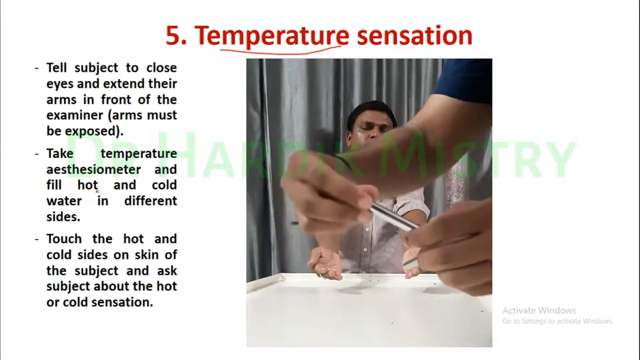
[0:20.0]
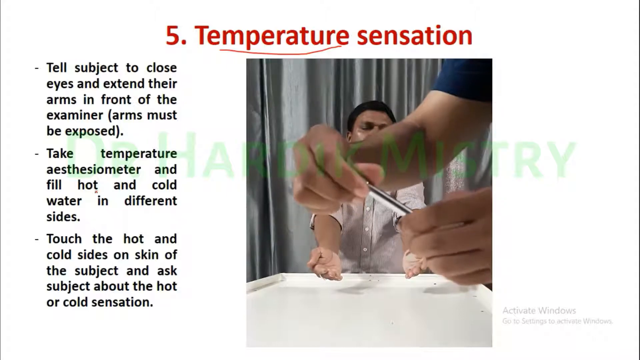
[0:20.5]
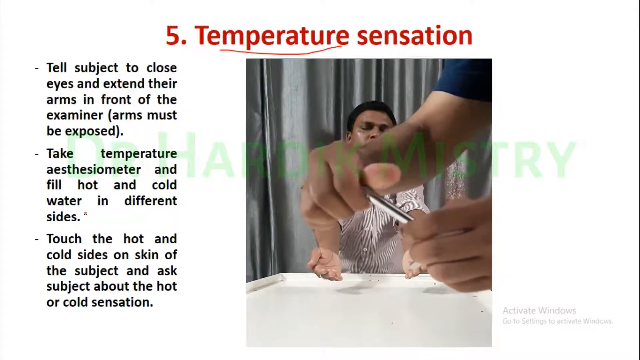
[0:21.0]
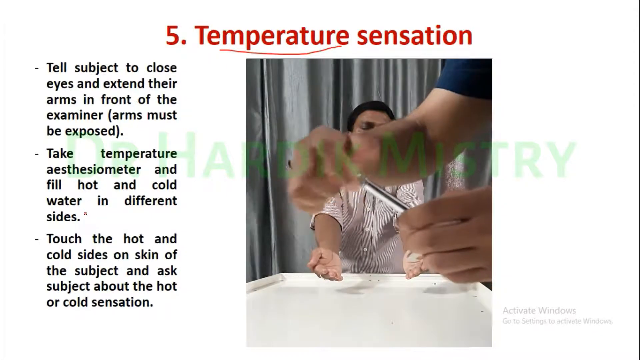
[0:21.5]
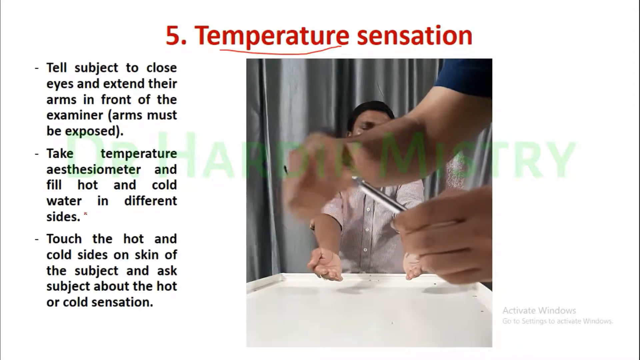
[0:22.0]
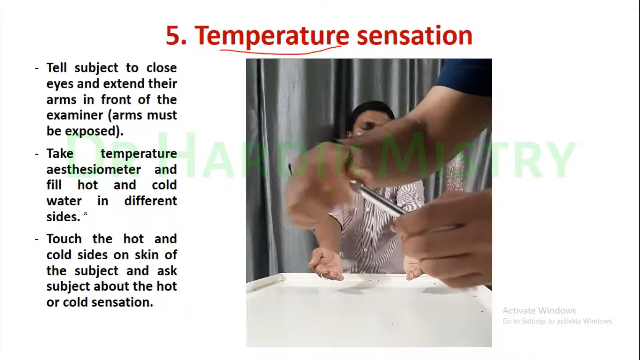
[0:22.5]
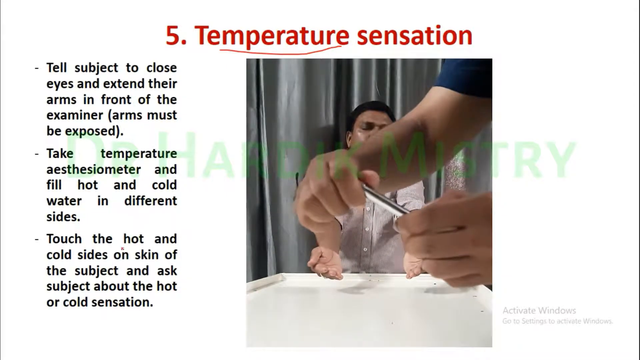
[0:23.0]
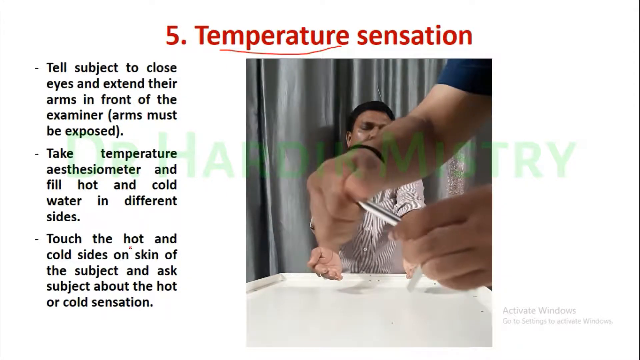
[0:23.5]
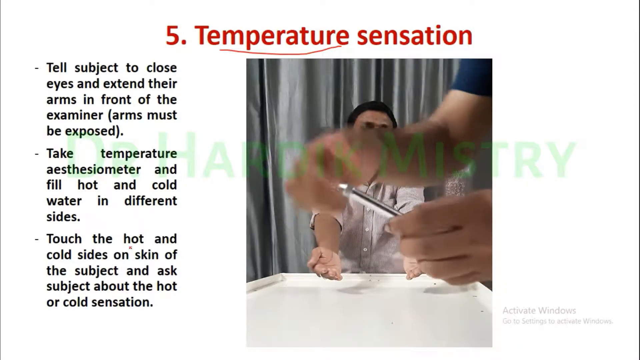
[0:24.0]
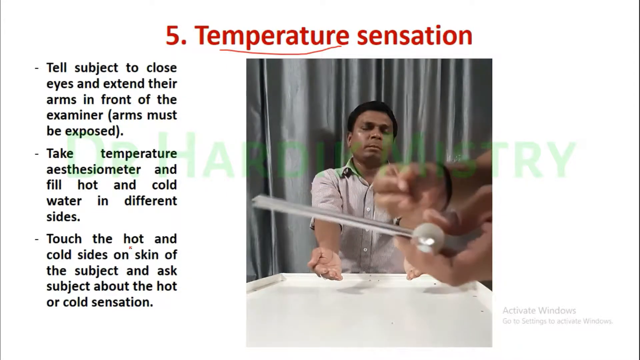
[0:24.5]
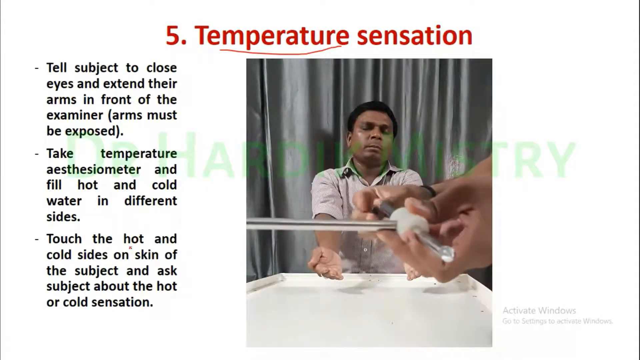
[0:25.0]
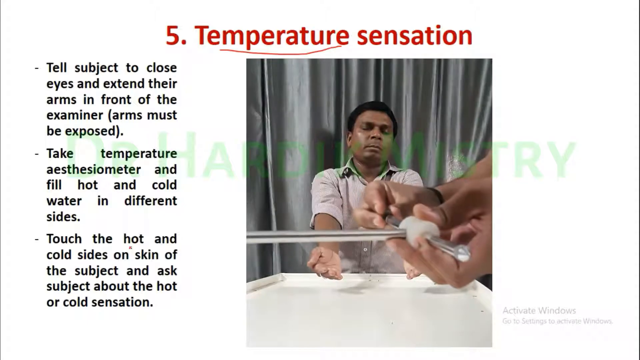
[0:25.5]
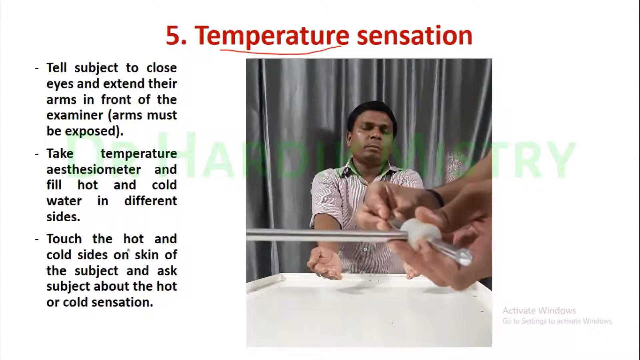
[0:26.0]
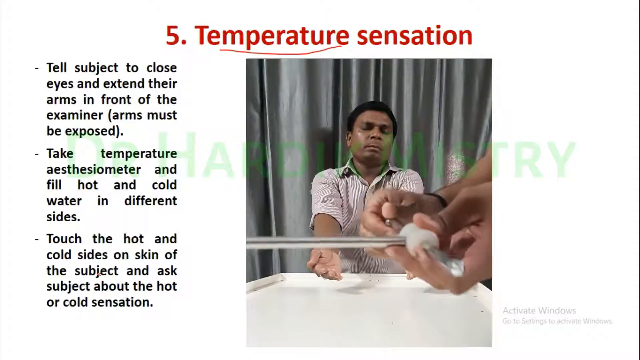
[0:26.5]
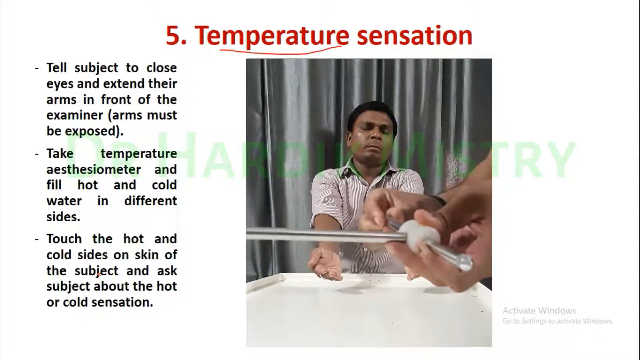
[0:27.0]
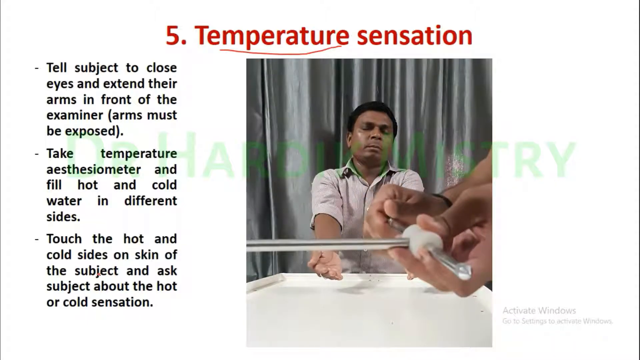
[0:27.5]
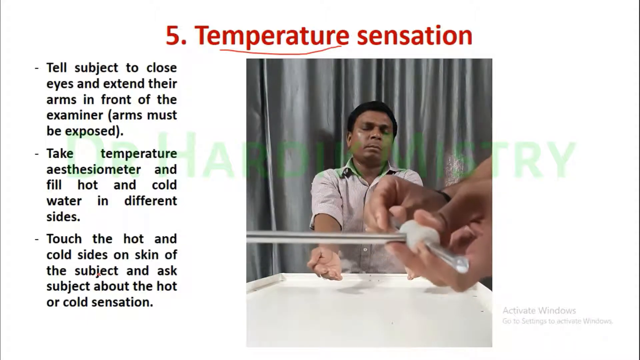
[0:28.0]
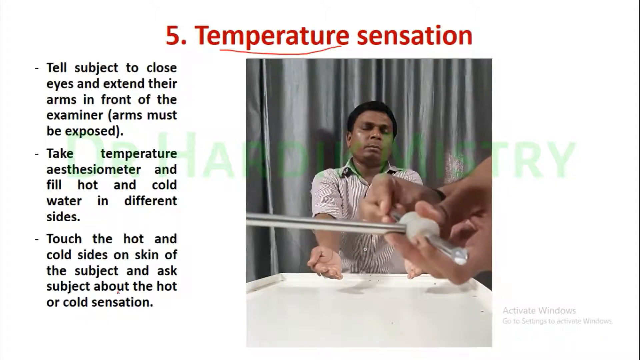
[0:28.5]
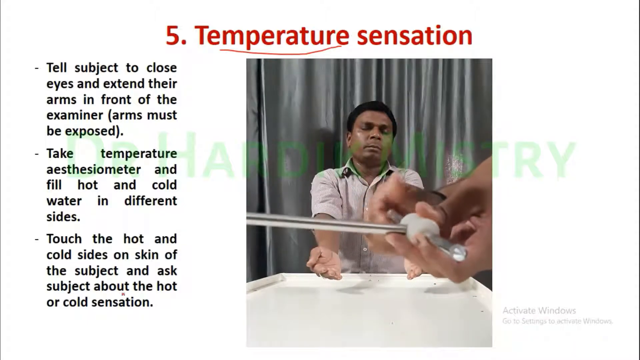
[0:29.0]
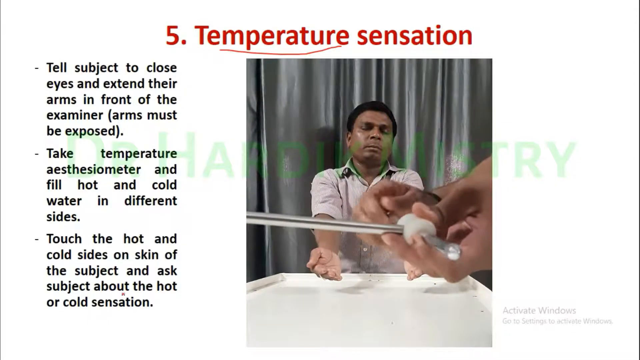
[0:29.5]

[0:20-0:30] A small window with a video is on the right, a header is at the top, and text is on the left. The red header reads "5. temperature sensation," with a messy red line under the word "temperature." The text on the left is in a narrow column: "tell subject to close eyes and extend their arms in front of the examiner. Arms must be exposed." The second item says "take temperature, aesthesiometer and fill hot and cold water in different sides," and the third says "touch the hot and cold sides on skin of the subject and ask the subject about the hot or cold sensation." In the video, the subject sits in front of a white table or a tray with his arms out in front of him and palms up, as if getting ready for the test. The person closest to the camera holds up what looks almost like a metal cross and is spinning things into the ends of the cross. The seated man has his eyes closed, as if he is nervous.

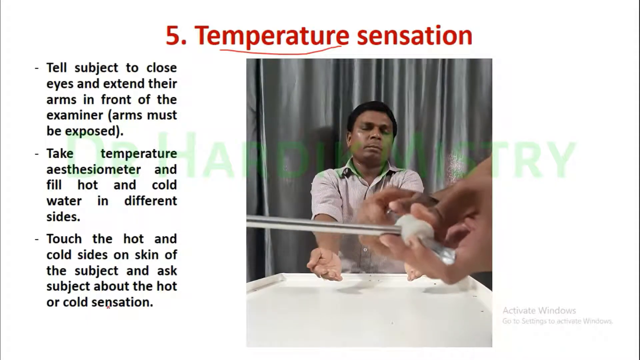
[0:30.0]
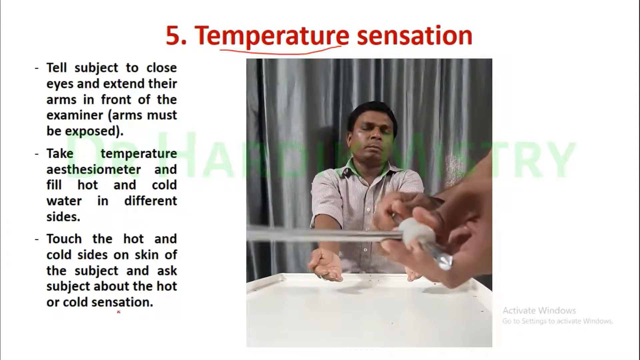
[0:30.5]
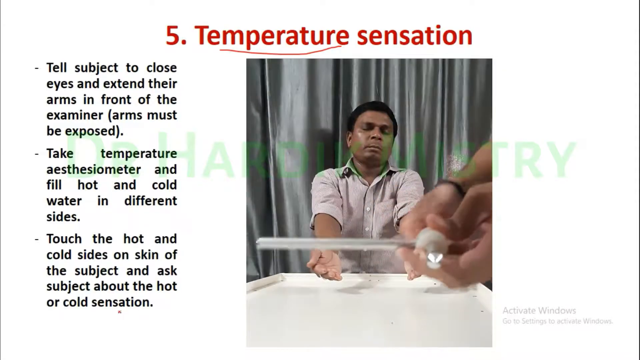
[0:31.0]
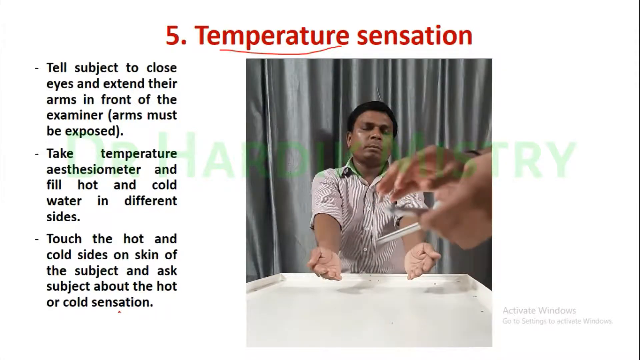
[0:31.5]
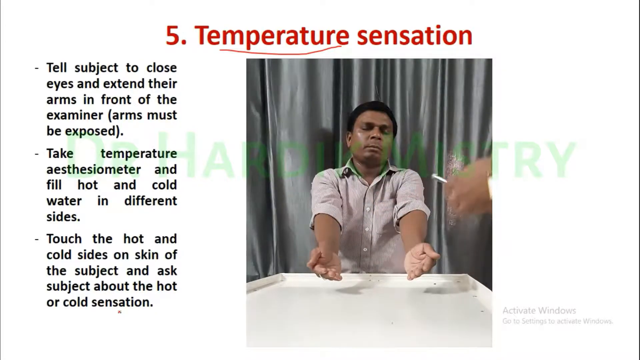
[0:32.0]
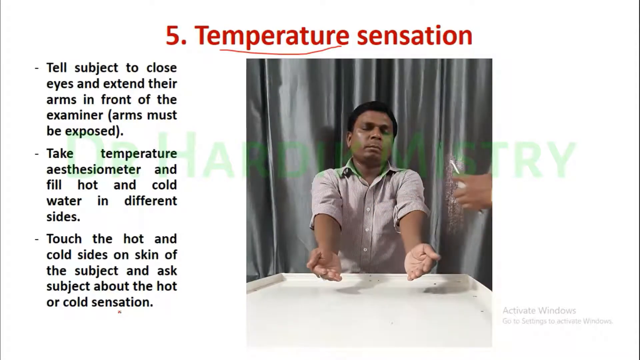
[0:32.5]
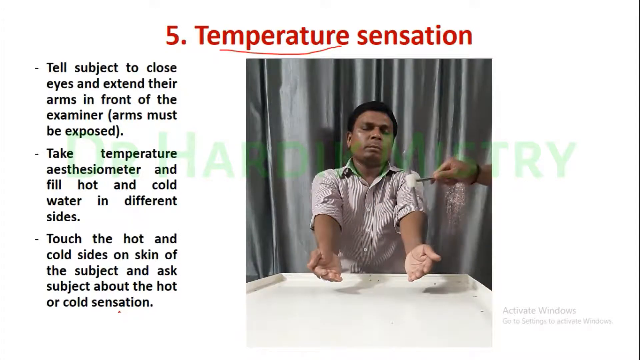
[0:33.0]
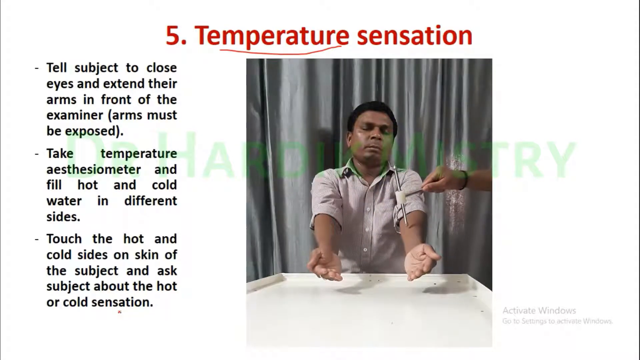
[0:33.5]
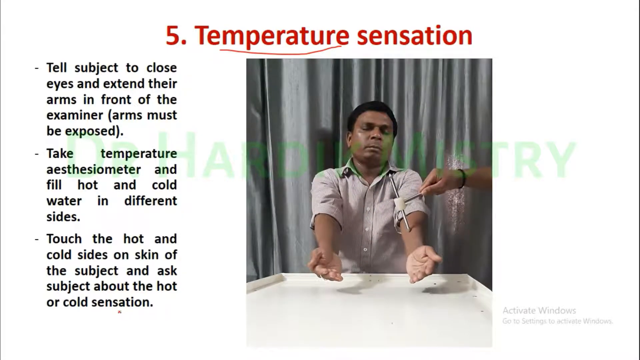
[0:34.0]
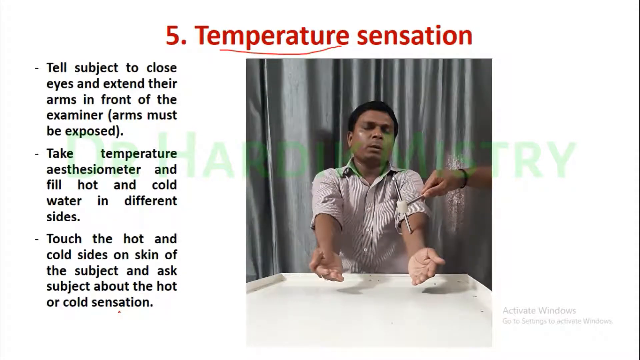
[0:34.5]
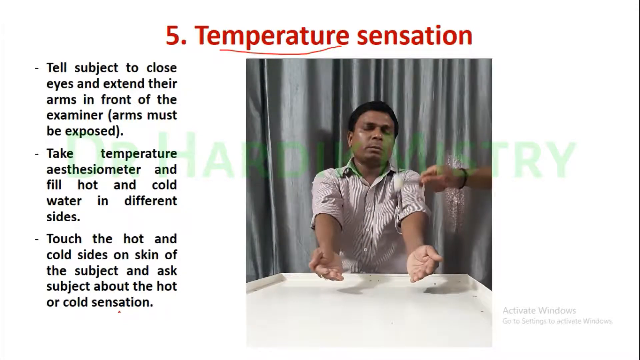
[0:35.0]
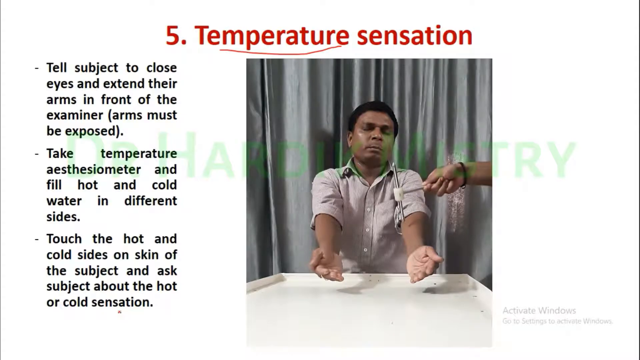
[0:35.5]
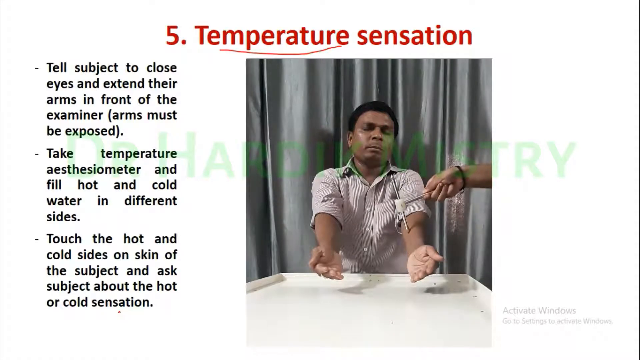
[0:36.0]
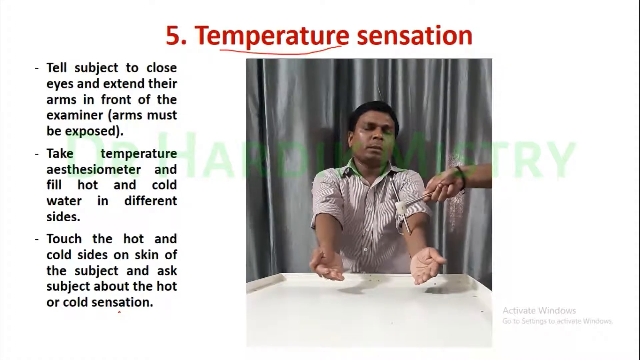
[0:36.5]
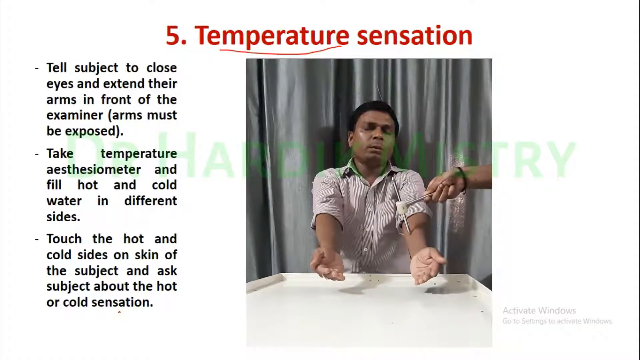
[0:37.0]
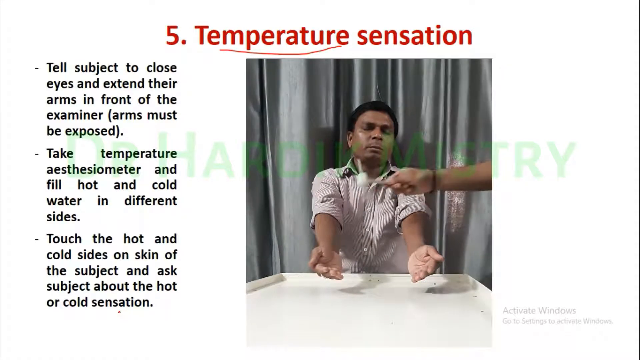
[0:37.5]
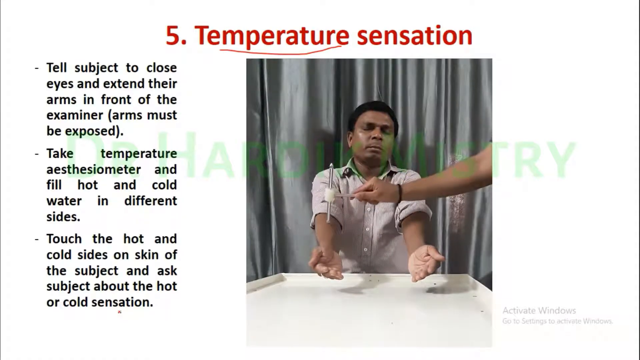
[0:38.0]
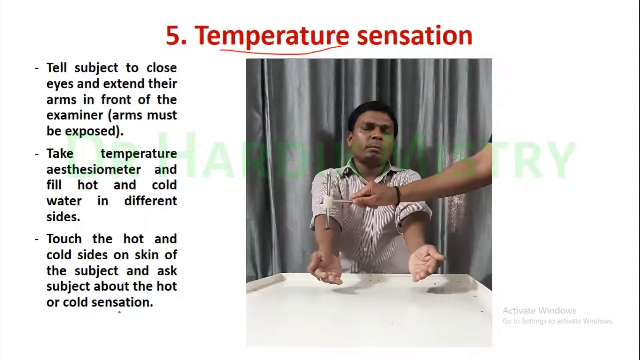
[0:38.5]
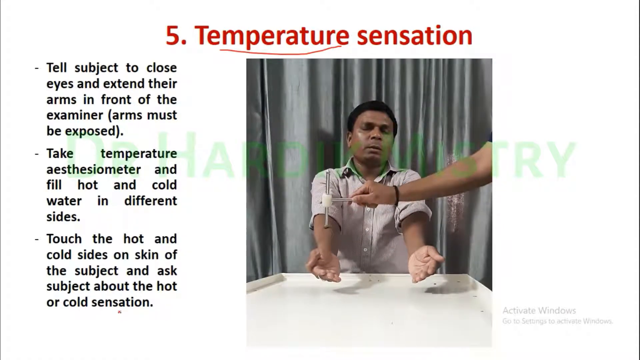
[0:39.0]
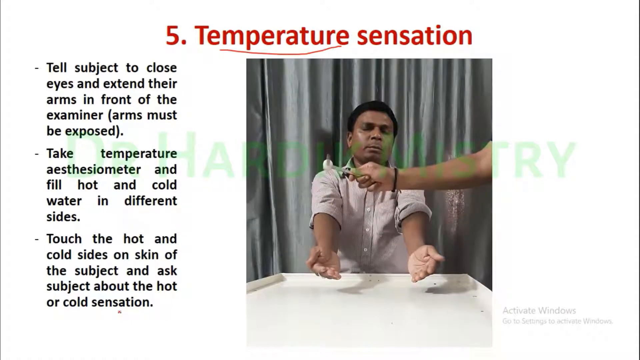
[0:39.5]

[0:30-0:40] Two different things are on the screen. On the right is a video of a man who appears to be a test subject, sitting in front of a big white tray. He wears a button-down collared shirt with the sleeves rolled up, has his eyes closed, and appears to be African-American. His arms are stretched out in front of him with palms up. Only the hands of another man are visible; he holds an item close to the camera that looks like a metal cross and turns metal pieces into the ends of the cross. The red words at the top read "5. temperature sensation," with the word "temperature" underlined very messily in red marker. On the left is a narrow column of three points, each starting with a dash: "tell subject to close eyes and extend their arms in front of the examiner arms must be exposed," then "take temperature aesthesiometer and fill hot and cold water in different sides," then "touch the hot and cold sides on the skin of the subject and ask the subject about the hot or cold sensation." The person who prepared the cross-like tool then presses its different ends into the subject's forearms, one end and then the other, and the subject appears to say a word each time it is pressed into his arm.